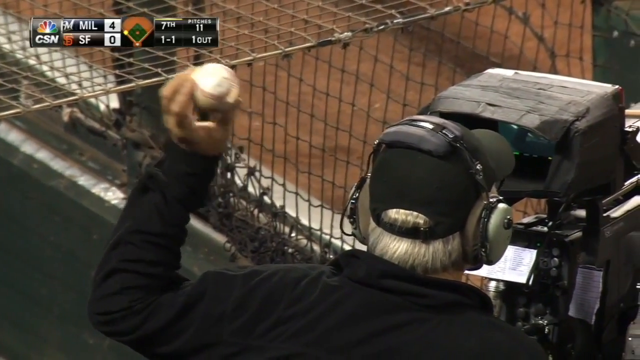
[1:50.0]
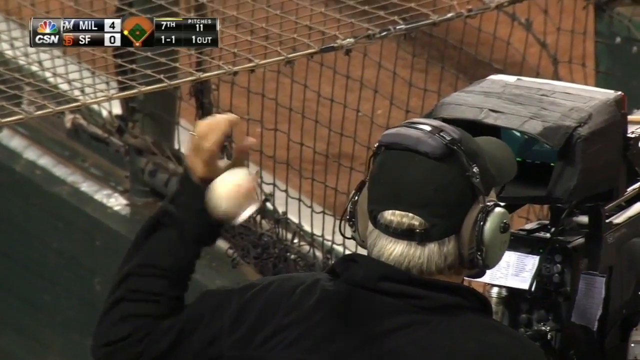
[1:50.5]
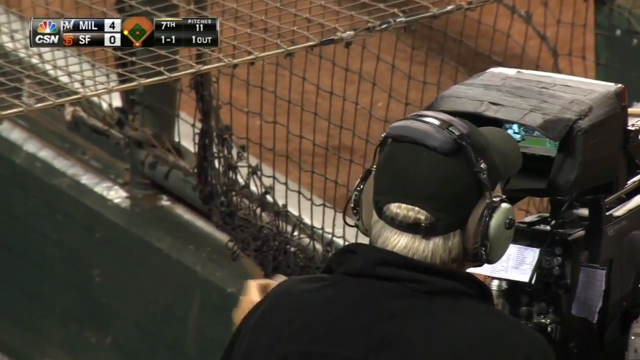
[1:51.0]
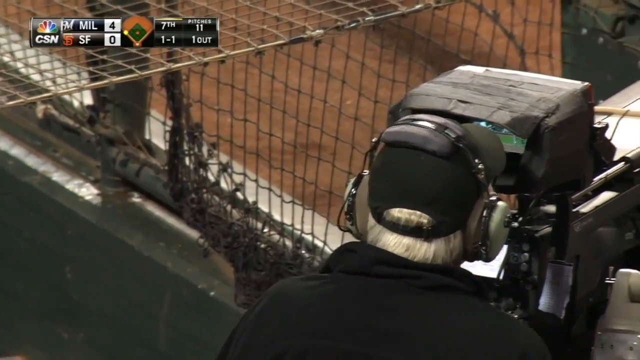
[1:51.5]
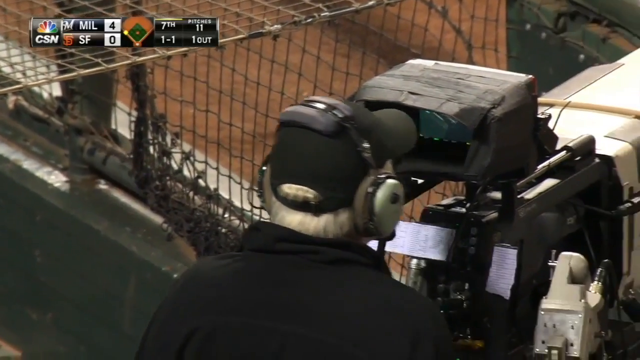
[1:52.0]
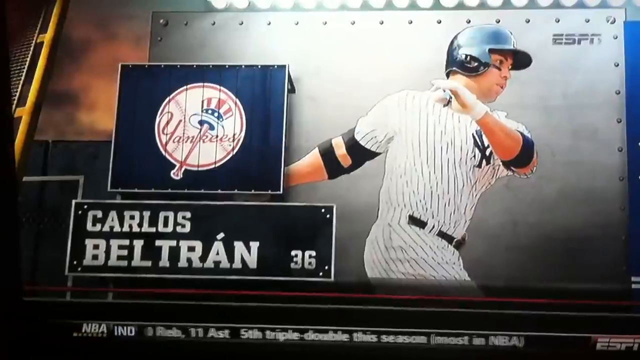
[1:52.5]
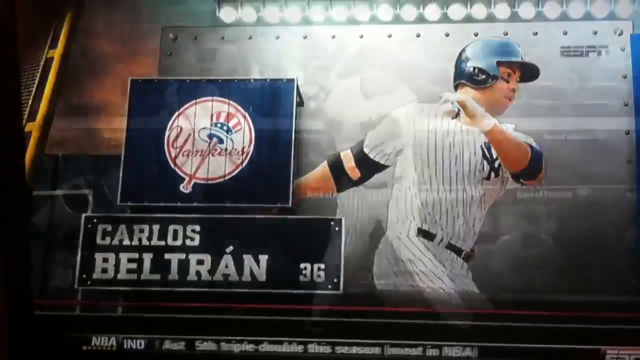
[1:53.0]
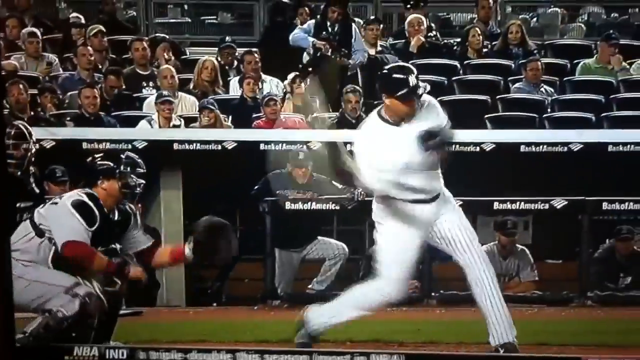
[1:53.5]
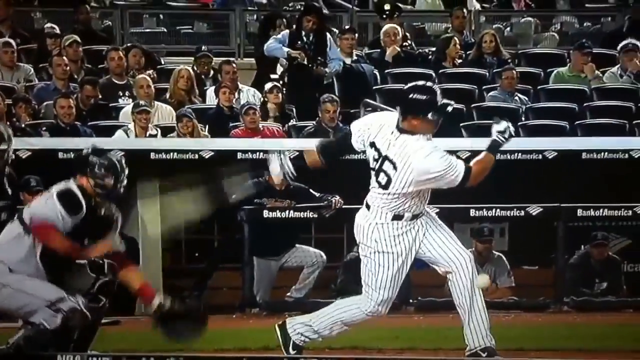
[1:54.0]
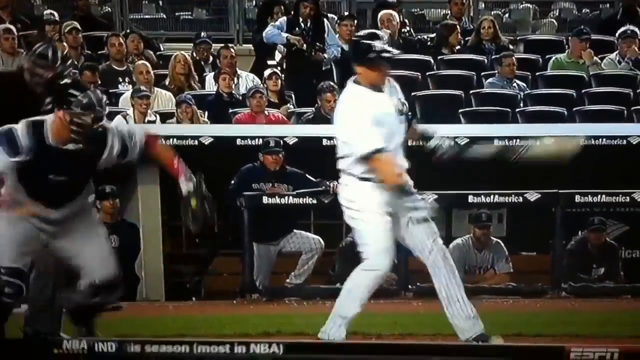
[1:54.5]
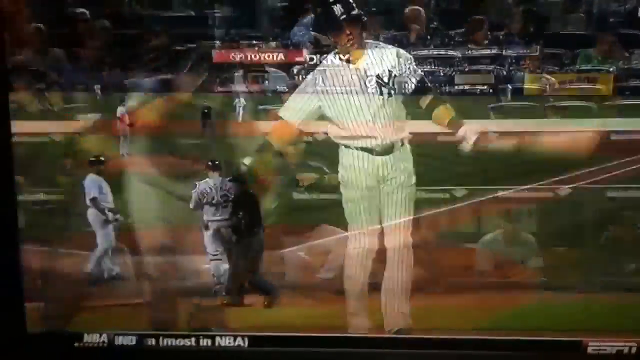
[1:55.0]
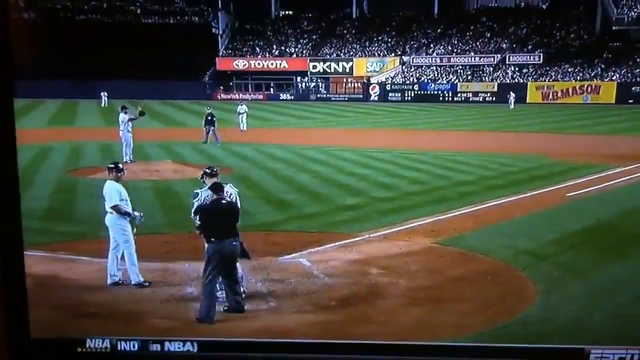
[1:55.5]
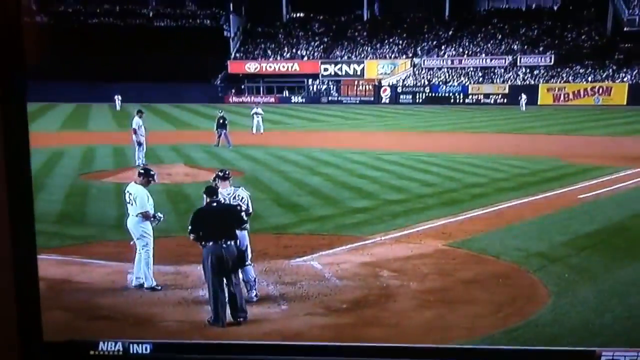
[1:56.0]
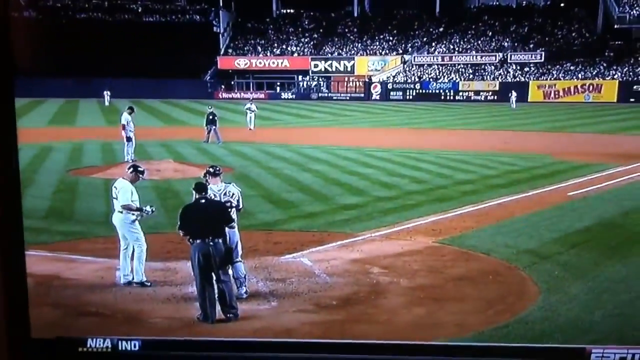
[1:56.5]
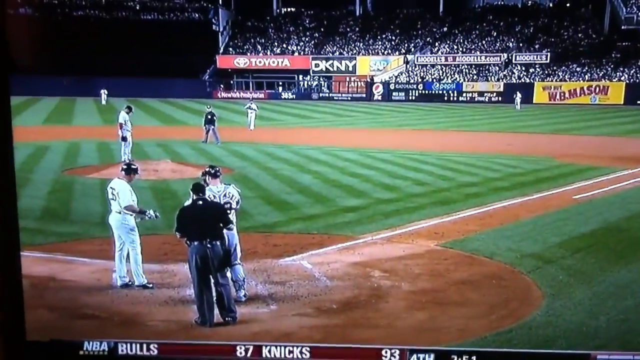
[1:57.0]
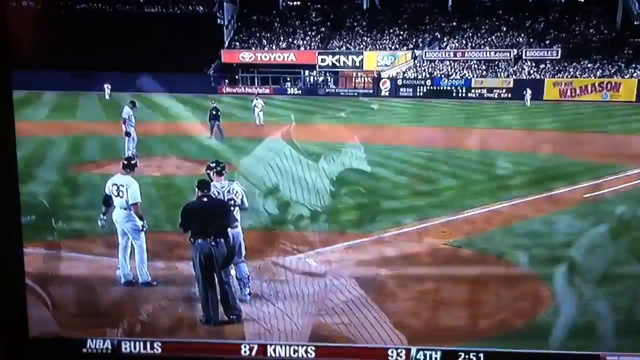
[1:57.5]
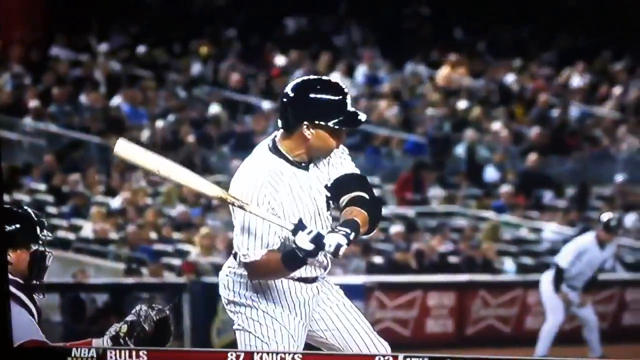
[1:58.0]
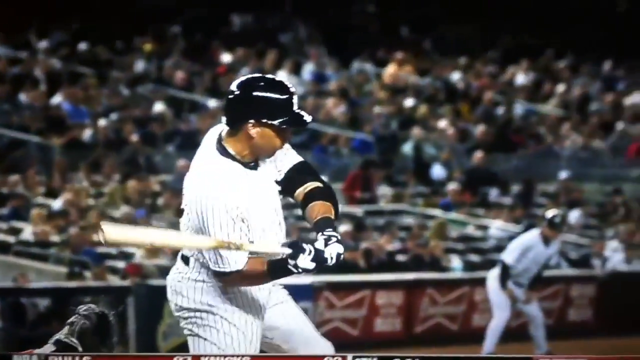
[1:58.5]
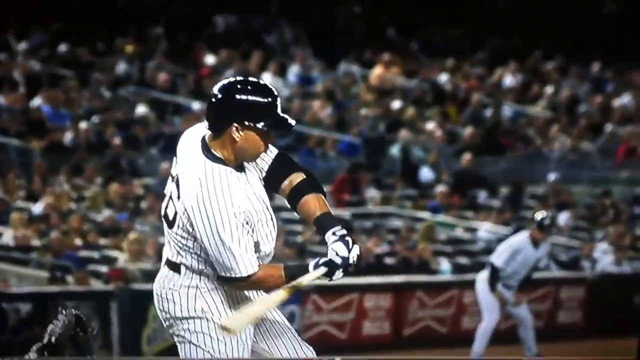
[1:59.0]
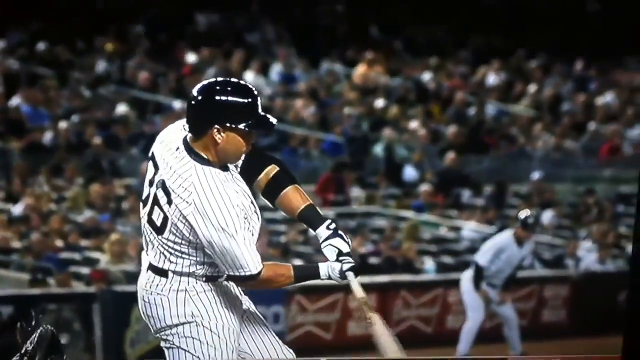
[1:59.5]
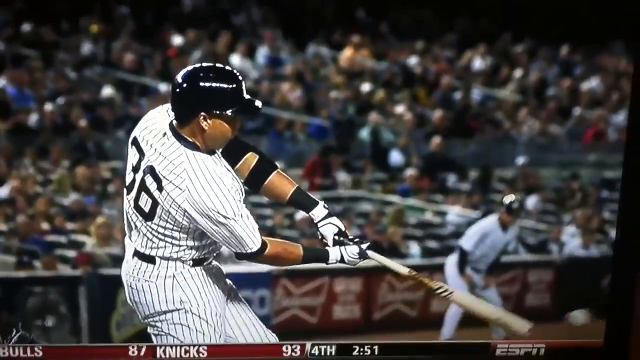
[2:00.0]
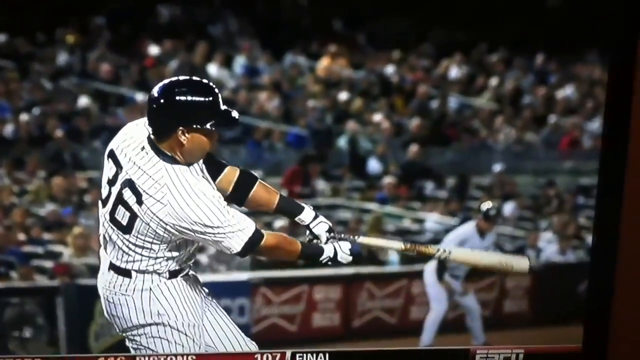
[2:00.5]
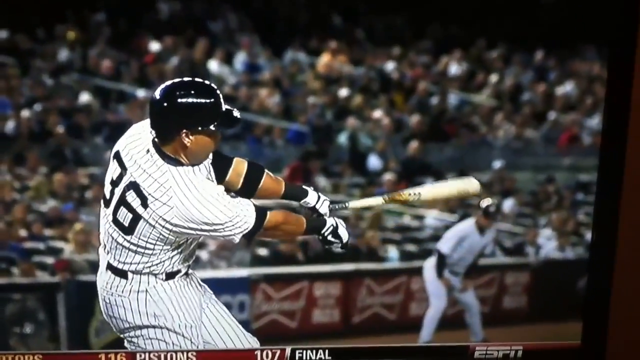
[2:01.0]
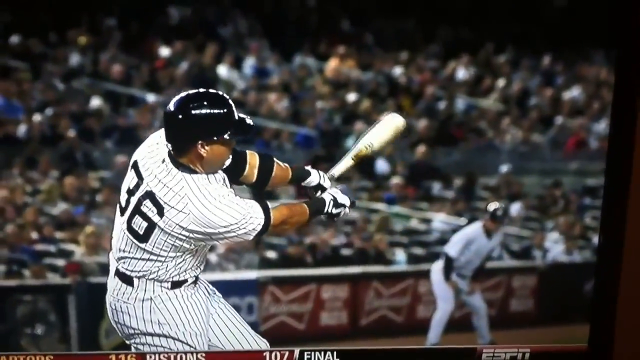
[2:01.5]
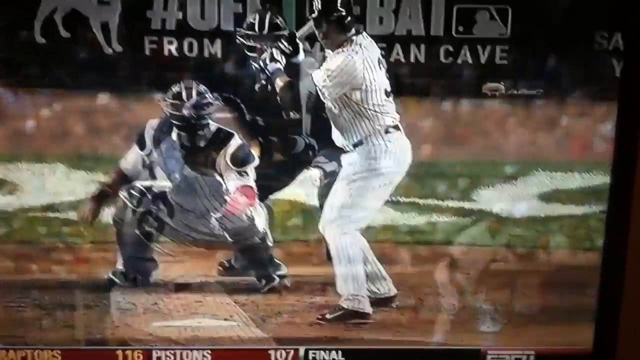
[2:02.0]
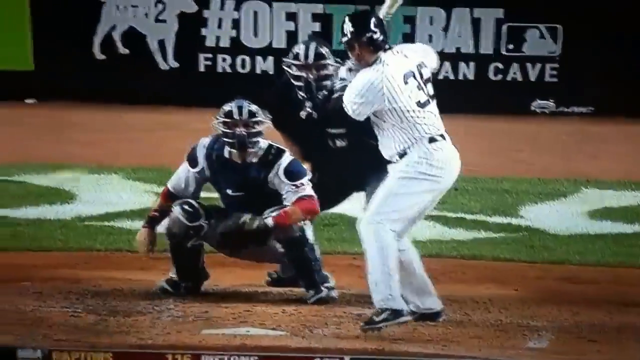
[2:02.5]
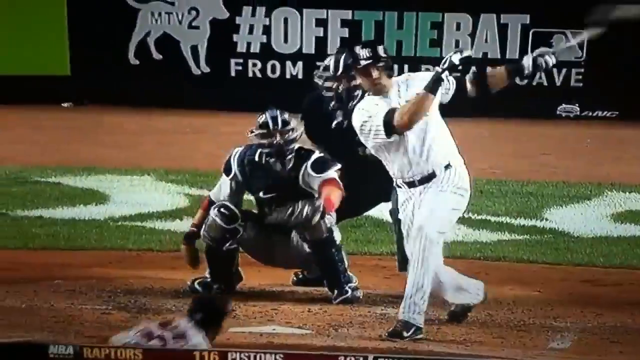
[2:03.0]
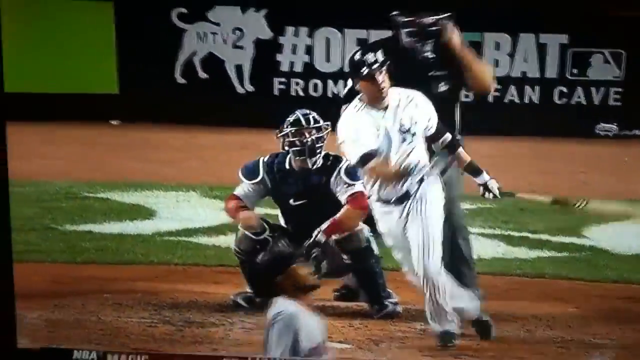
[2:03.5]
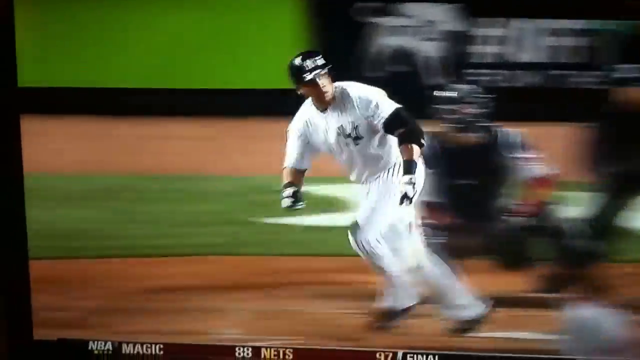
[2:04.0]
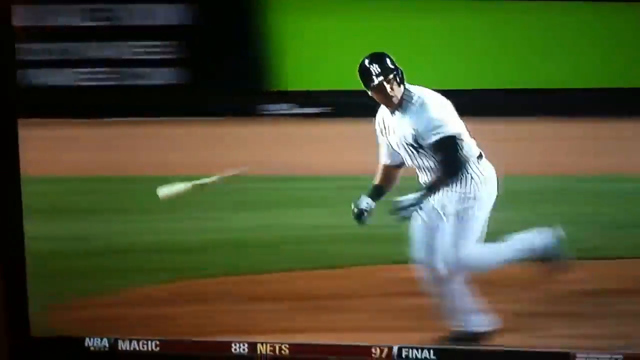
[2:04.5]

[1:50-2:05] The batter swings at the pitch, viewed on what appears to be almost like a TV screen. In slow motion, the bat just barely tips the ball at the very tip of the bat, nicking it more like a bunt than an actual hit, and the ball rips. A side view of the team shows some of the players but not all. The shot then goes to the cameraman holding the ball, who hits himself in the back of the head with it. The cameraman seems to be one of the older people in the video, though his exact age is hard to tell. A name then pops up on screen: "Carlos Beltran".